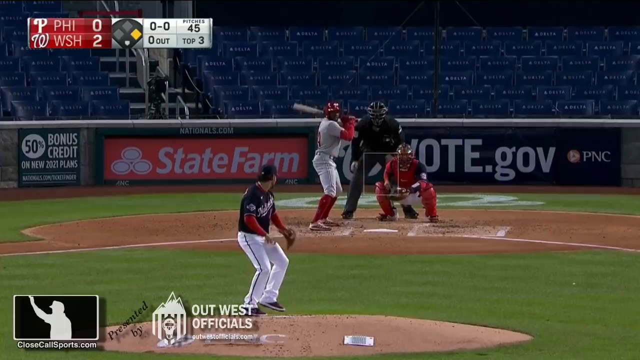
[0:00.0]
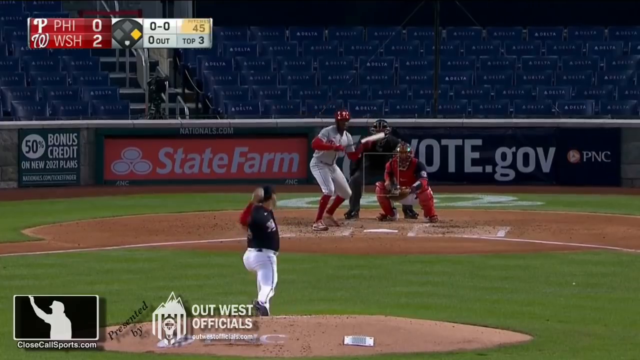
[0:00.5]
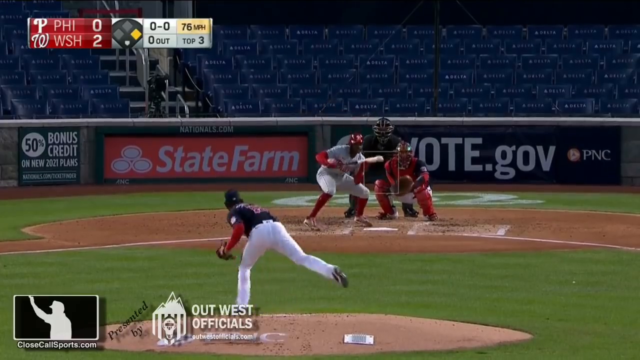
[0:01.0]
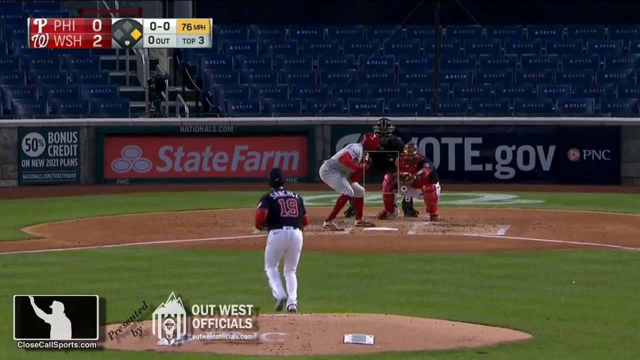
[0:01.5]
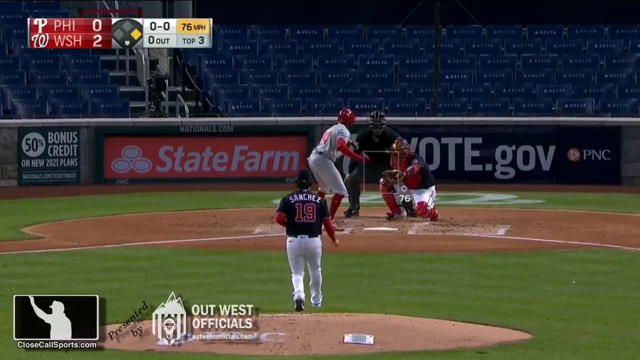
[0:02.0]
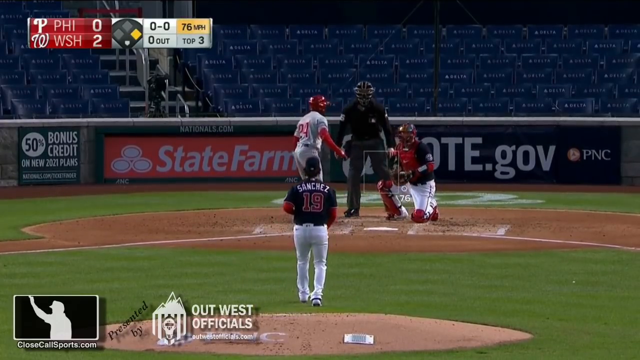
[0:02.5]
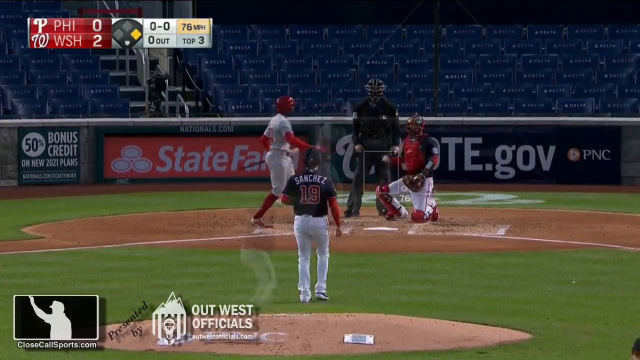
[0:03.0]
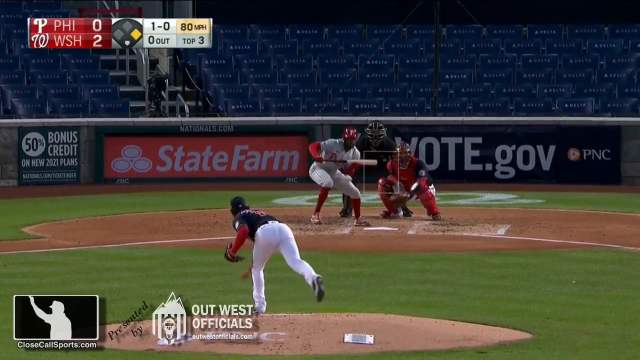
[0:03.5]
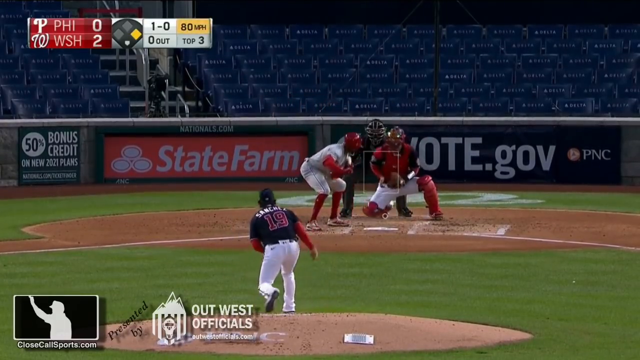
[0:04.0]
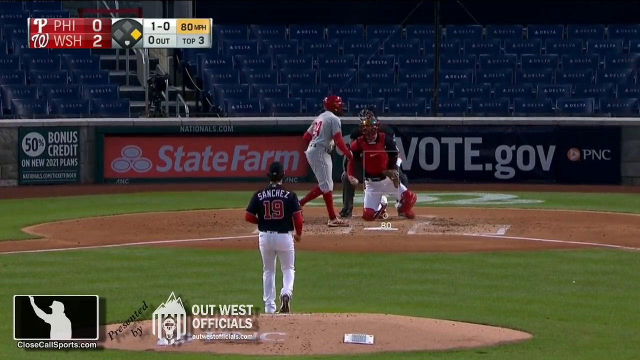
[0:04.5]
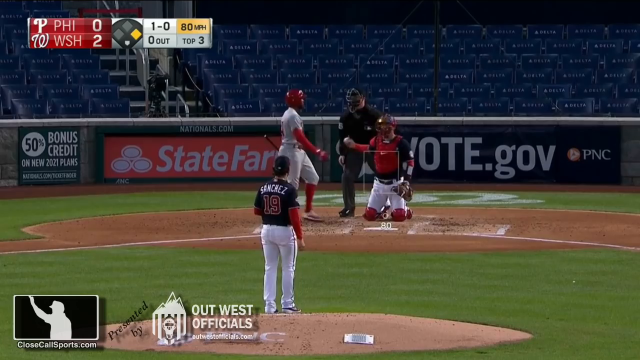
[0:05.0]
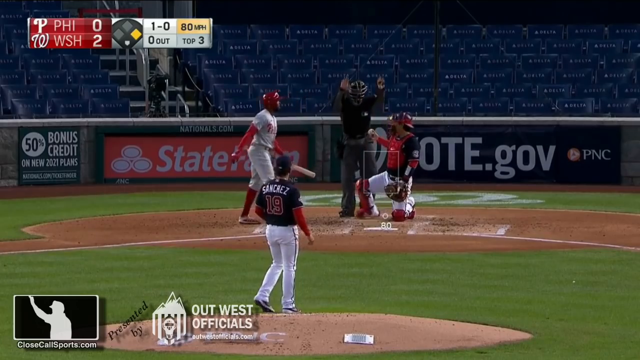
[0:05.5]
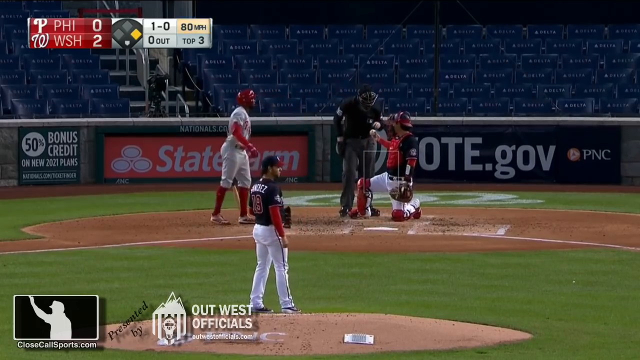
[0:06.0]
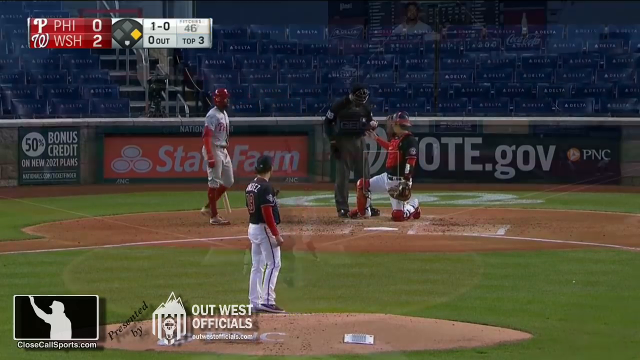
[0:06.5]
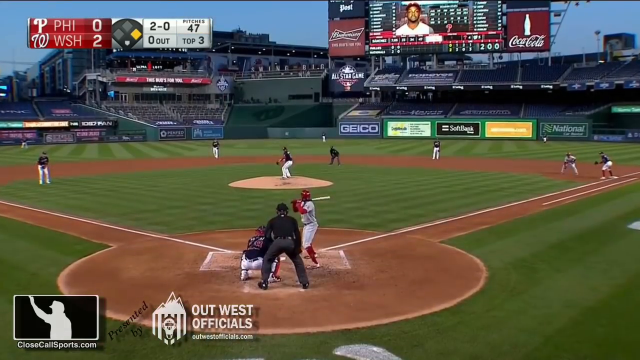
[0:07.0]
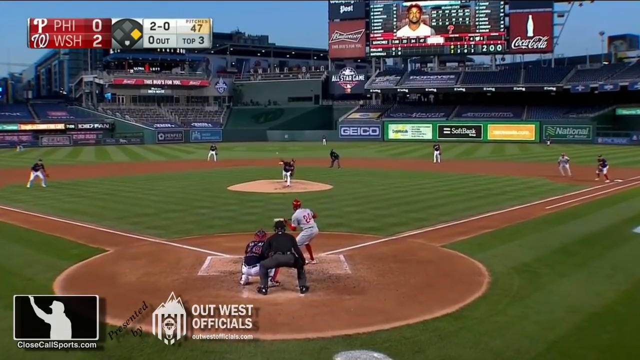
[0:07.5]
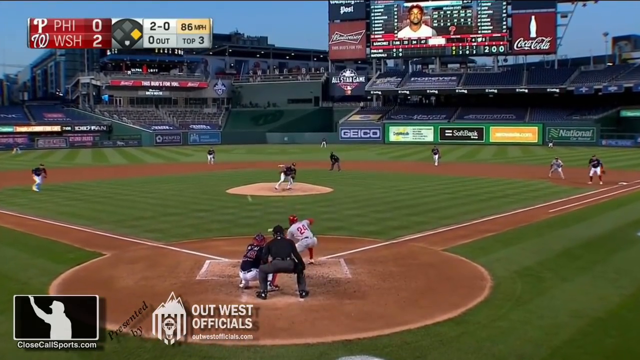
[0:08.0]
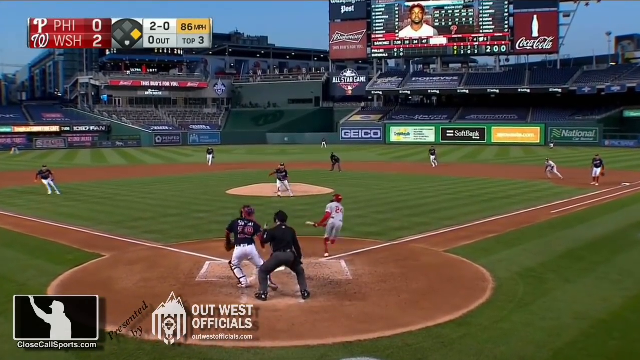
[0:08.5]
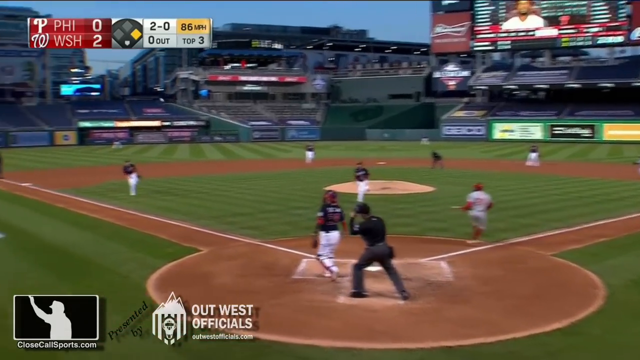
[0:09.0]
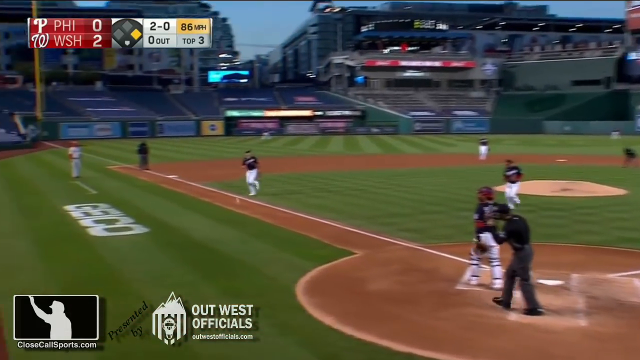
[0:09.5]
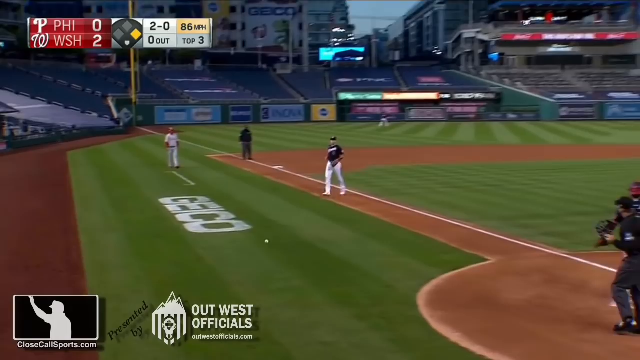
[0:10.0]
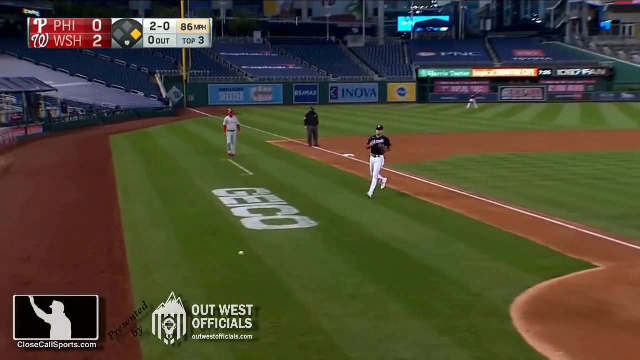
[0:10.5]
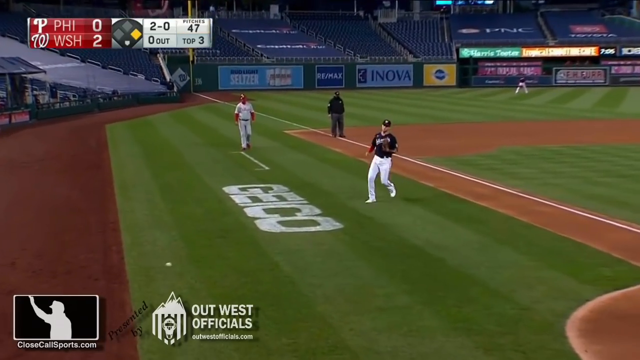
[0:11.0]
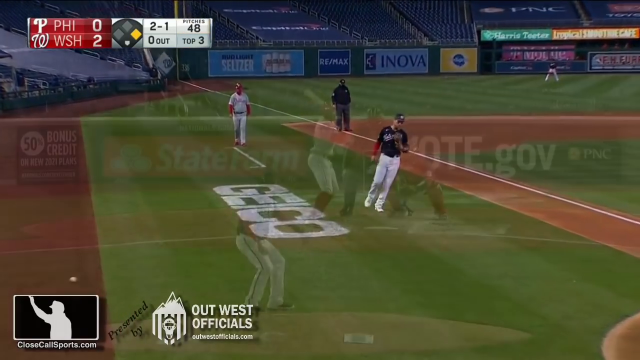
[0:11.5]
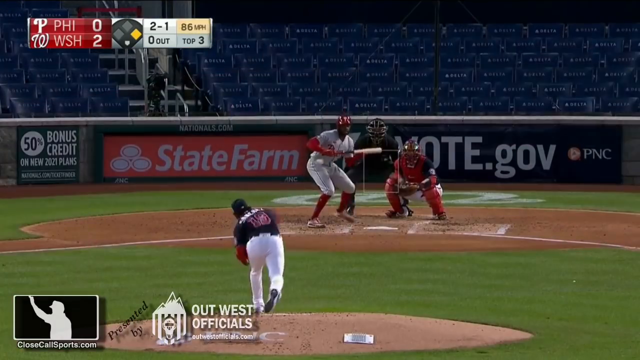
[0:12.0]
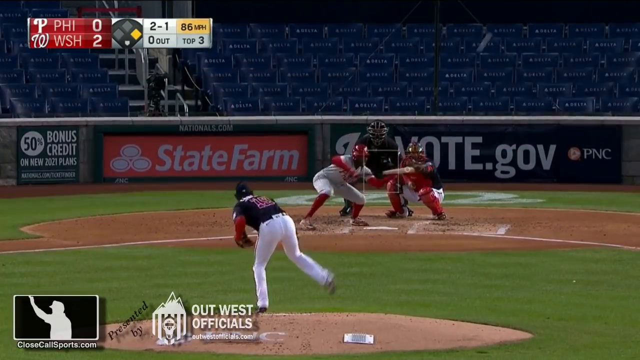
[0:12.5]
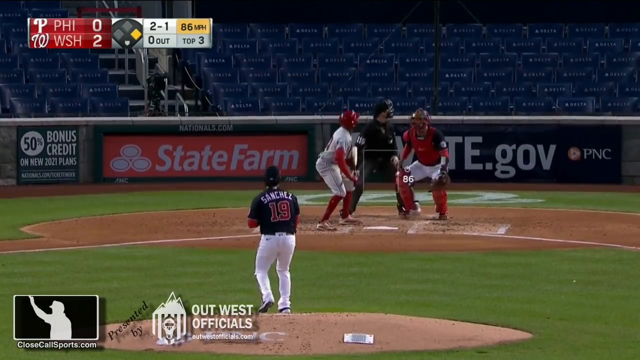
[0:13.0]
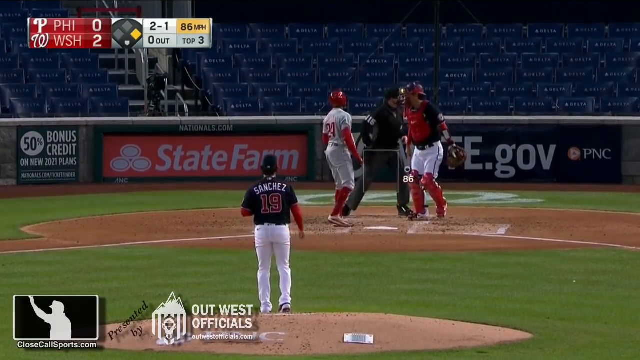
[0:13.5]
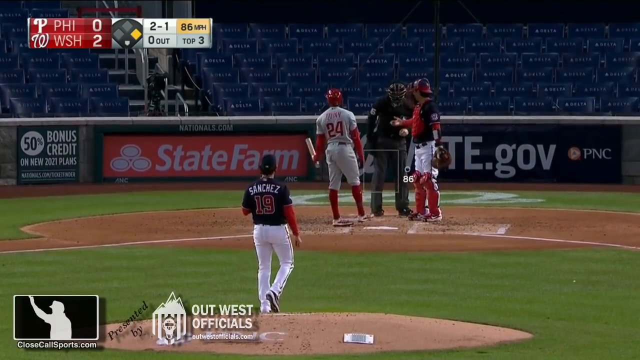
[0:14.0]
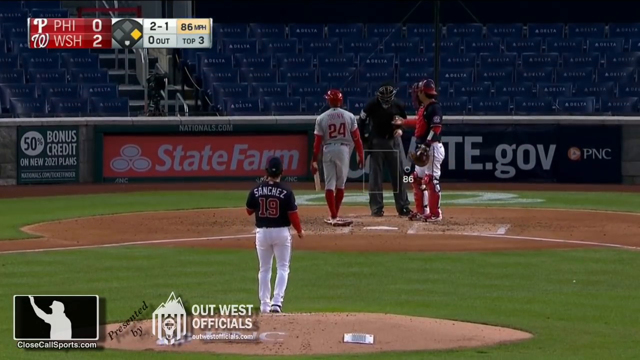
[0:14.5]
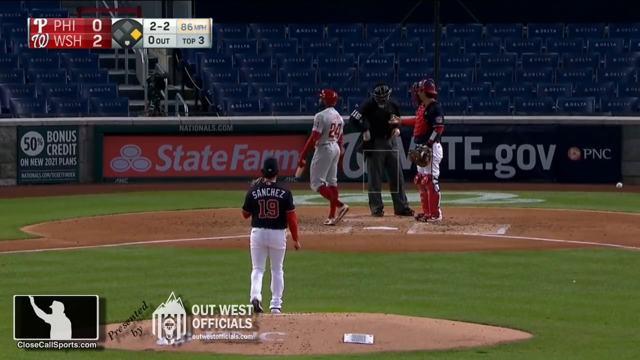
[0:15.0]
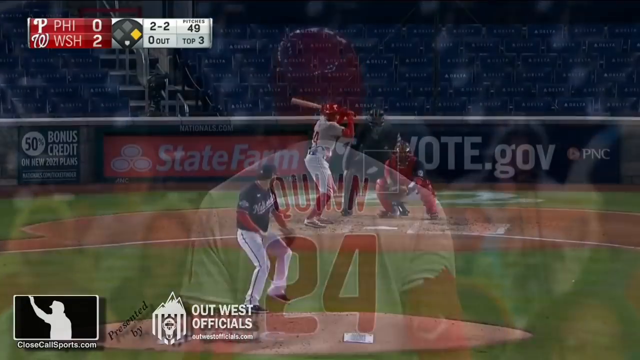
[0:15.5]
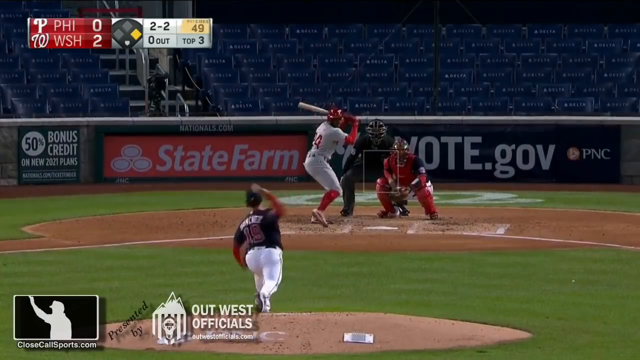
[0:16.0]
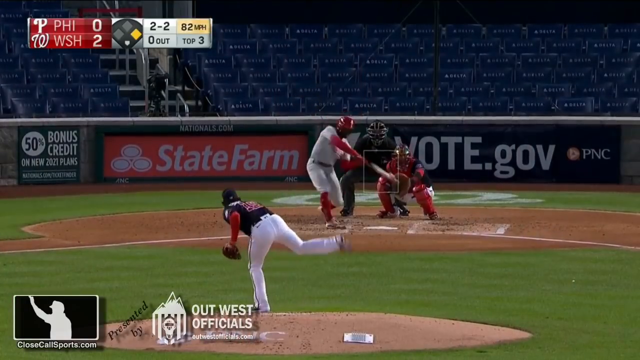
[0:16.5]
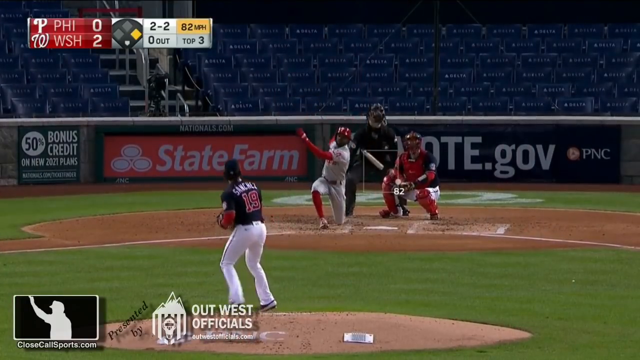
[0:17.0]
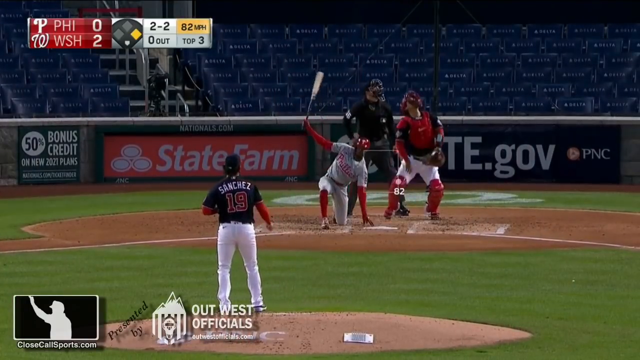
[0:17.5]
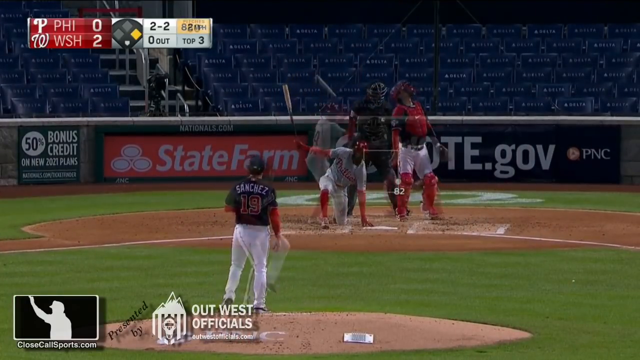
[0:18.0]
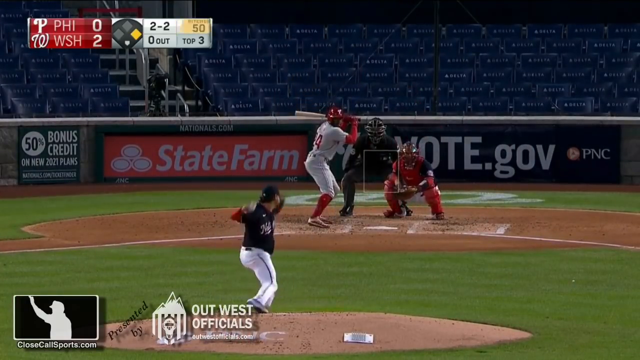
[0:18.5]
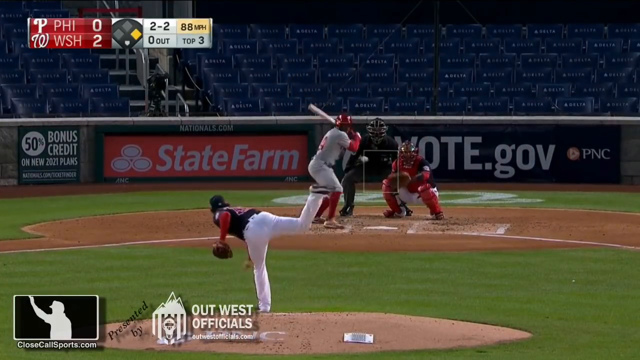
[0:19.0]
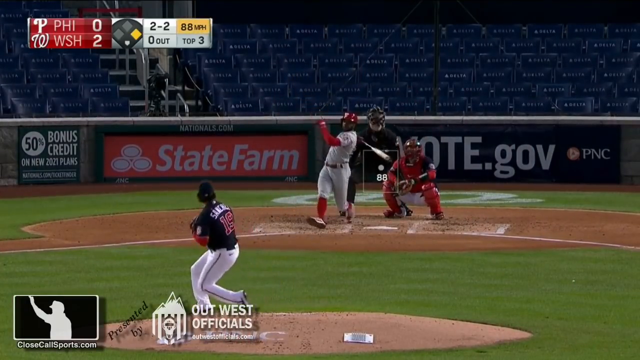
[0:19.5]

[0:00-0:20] A baseball game is underway in a stadium, with advertisements on the wall behind the players. One reads "vote.gov", another reads "State Farm" in red with white print, and another says "50% off bonus credit on new 2021 plans" with some words below it; "nationals.com" also appears. A pitcher on the mound pitches to a man trying to bunt. He bunts the ball foul and keeps trying to bunt, but it doesn't seem to work. He then starts swinging and keeps missing, even though the swings look good. The scoreboard apparently shows two teams, Washington leading Philadelphia 2 to 0, with a count of 0-0, zero outs, 45 pitches, and "top 3".